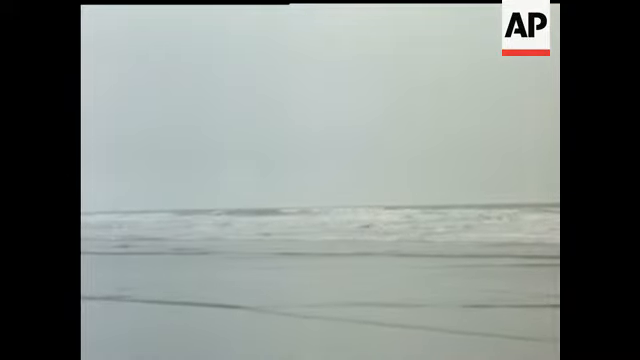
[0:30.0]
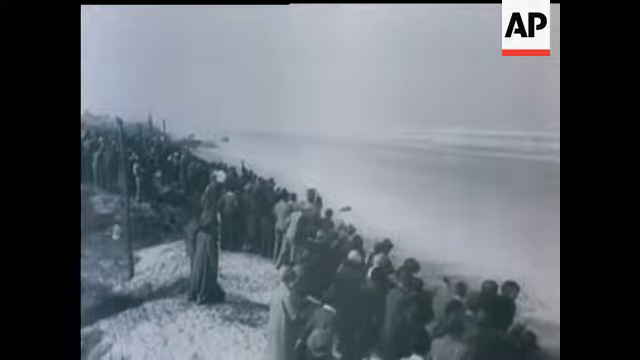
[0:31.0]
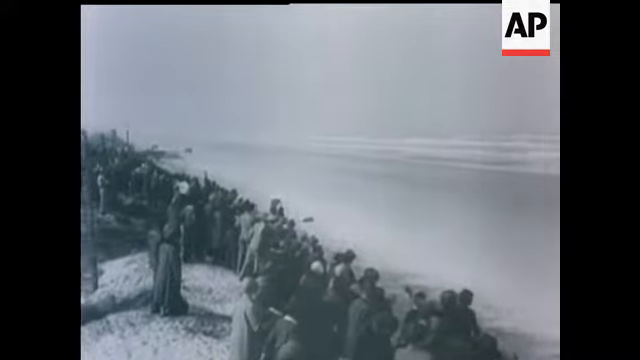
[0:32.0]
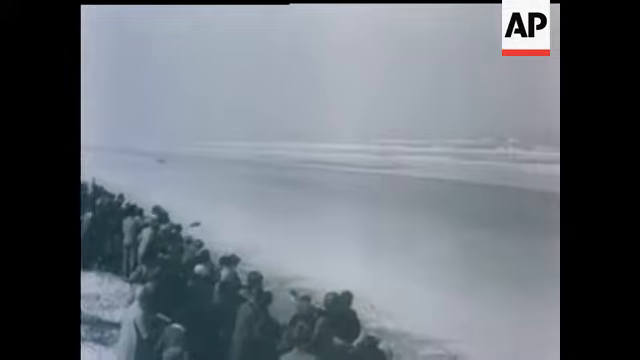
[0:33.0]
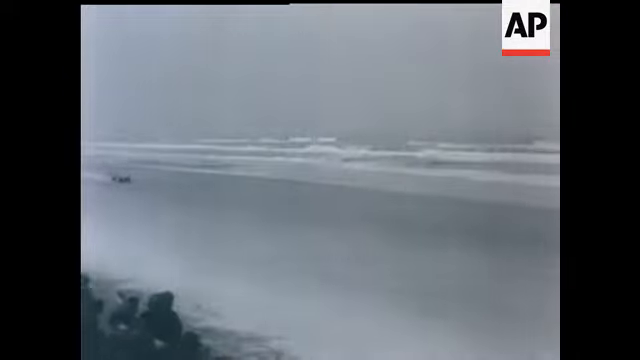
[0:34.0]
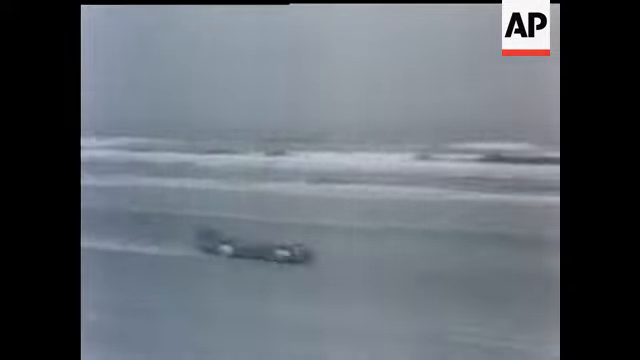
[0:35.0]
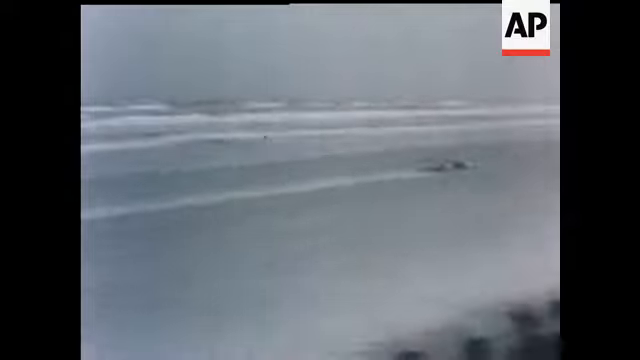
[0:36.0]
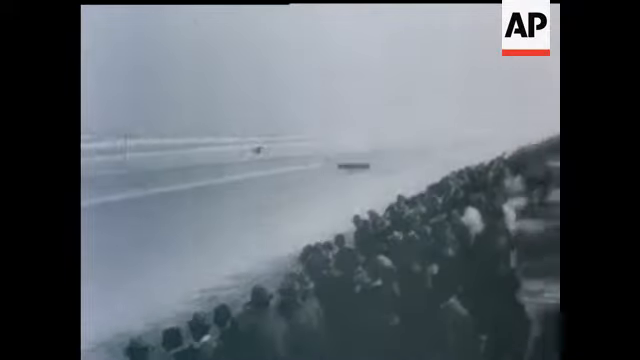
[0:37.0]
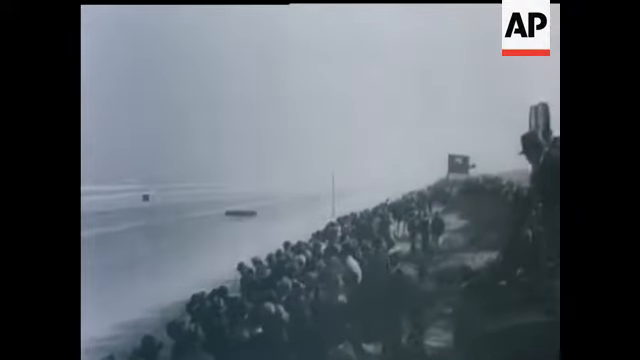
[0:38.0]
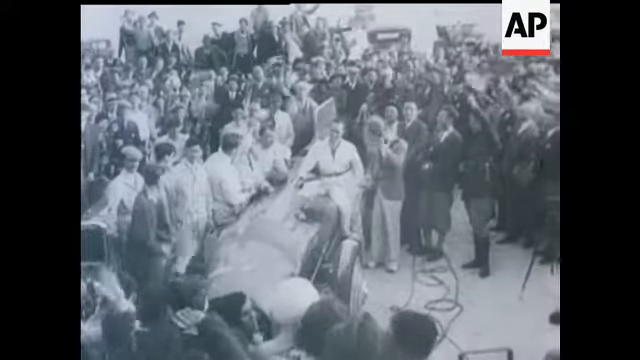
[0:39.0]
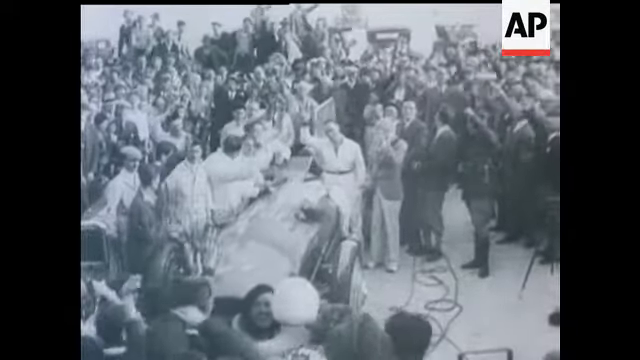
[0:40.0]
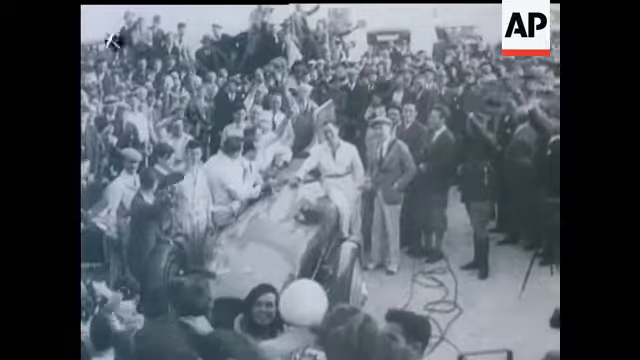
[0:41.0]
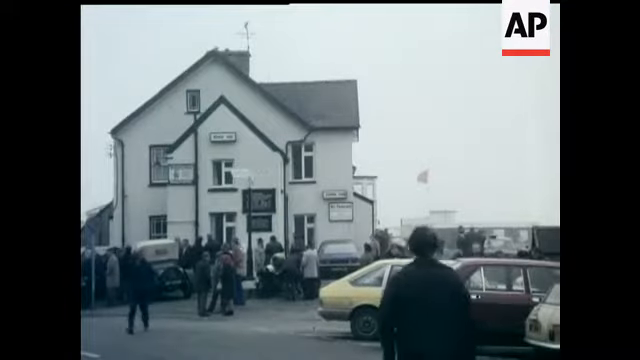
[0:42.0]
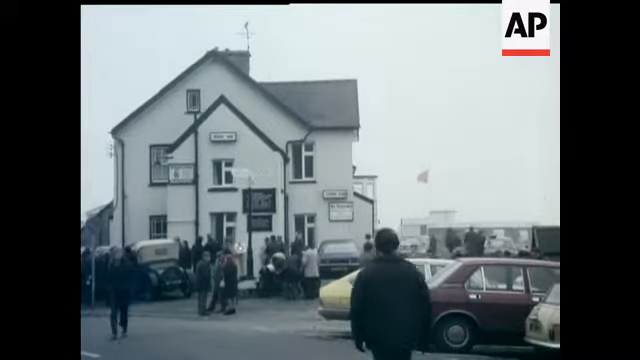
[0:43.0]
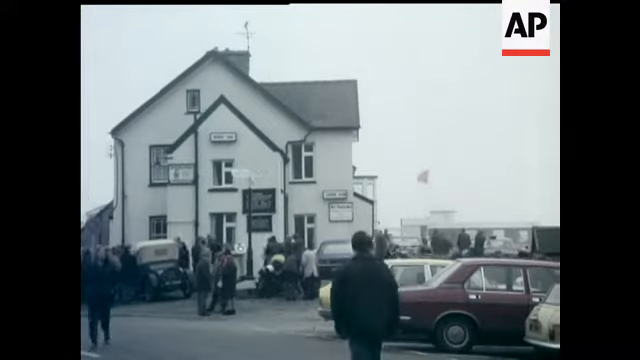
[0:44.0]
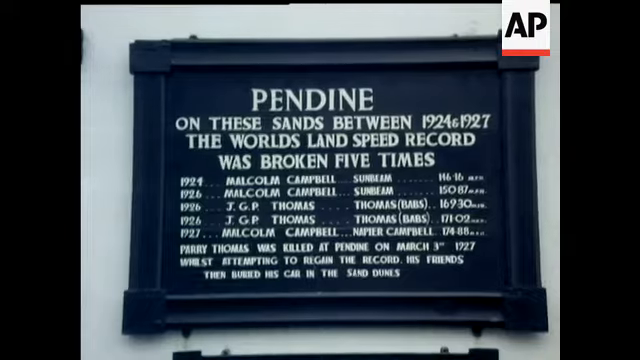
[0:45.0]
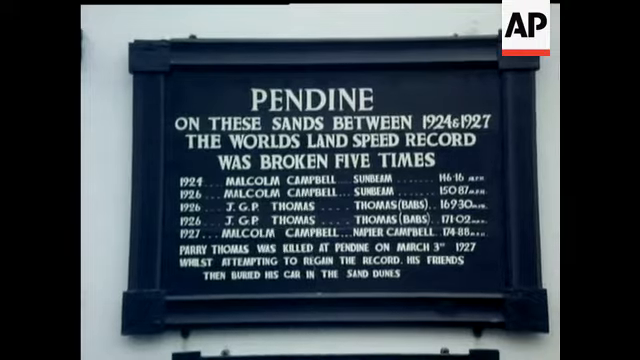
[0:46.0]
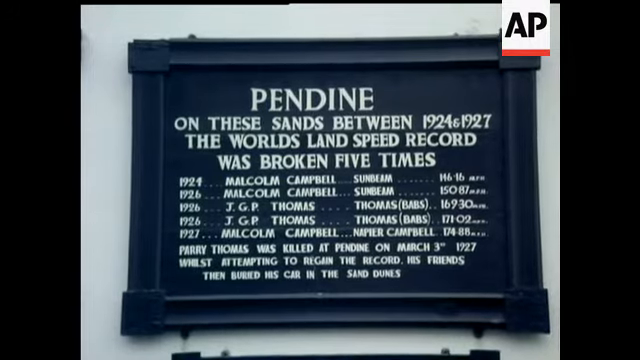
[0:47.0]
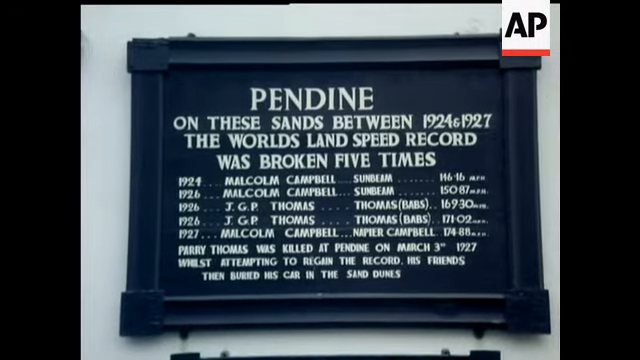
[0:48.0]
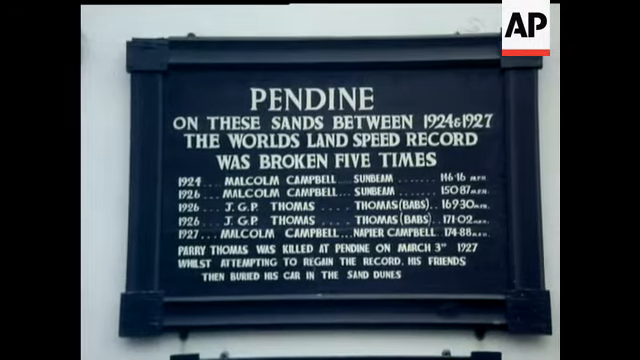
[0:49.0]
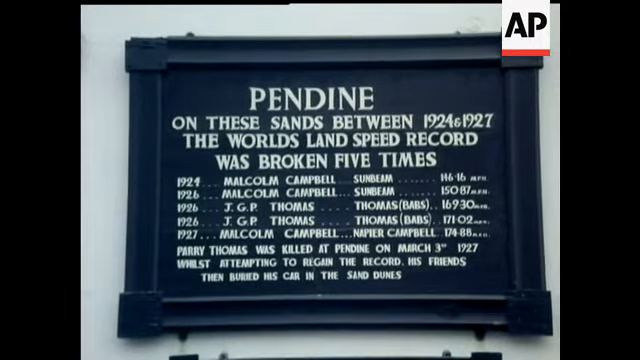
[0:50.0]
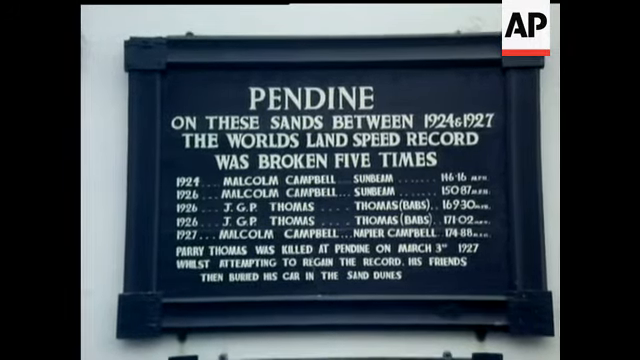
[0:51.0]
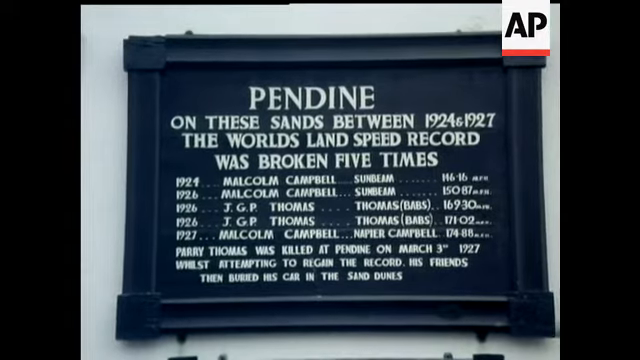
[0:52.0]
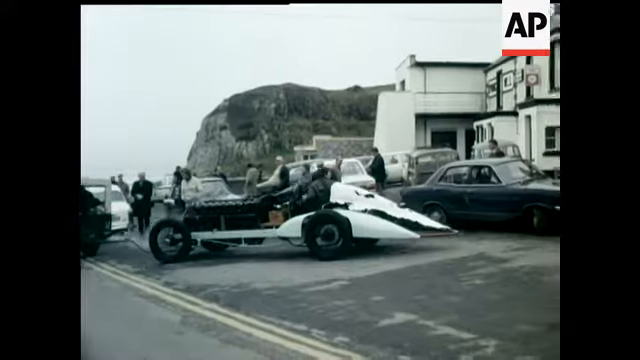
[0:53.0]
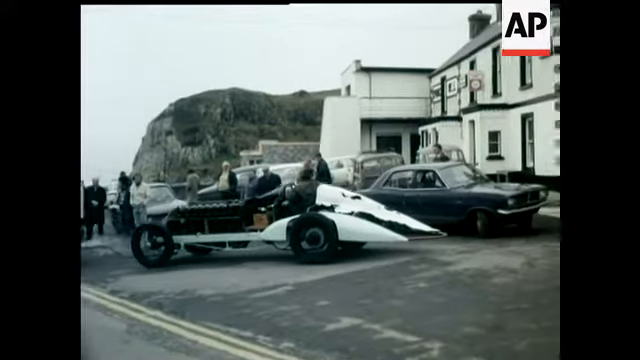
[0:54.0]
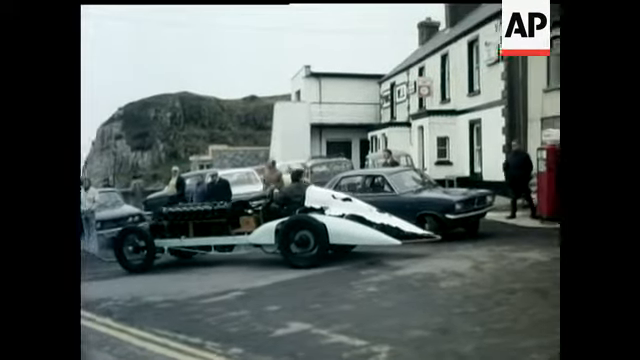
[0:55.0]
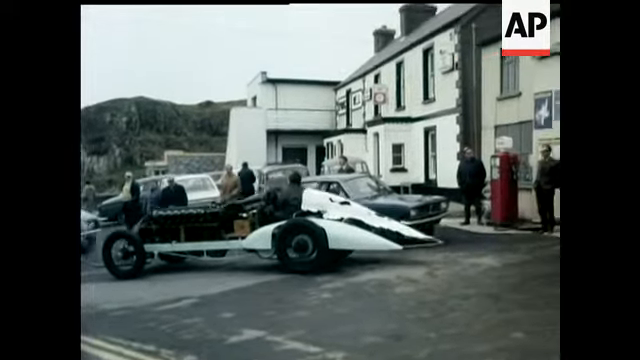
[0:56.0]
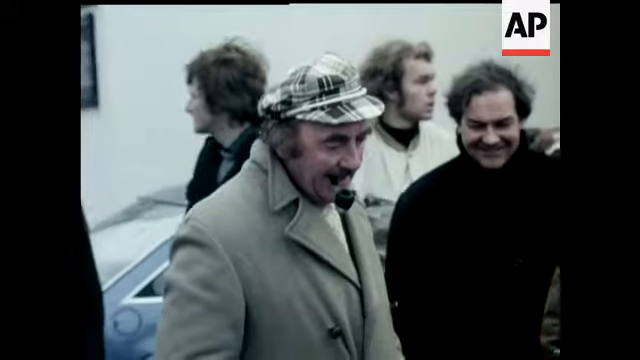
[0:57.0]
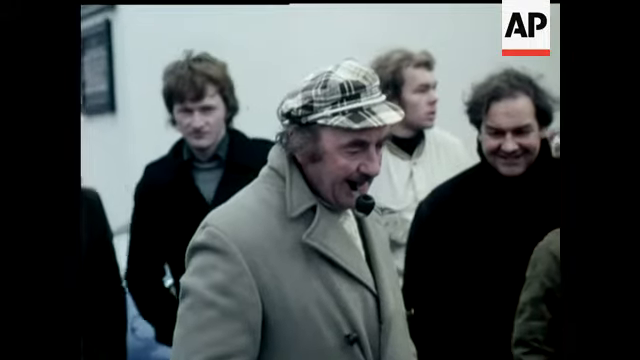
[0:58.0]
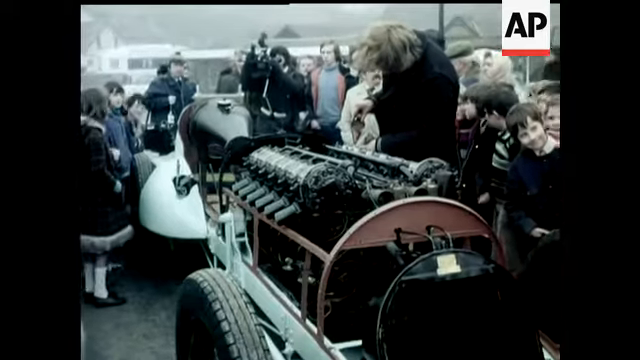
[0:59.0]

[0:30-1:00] Spectators stand on the left side of the beach, and off in the distance a race car shaped like a missile drives up the beach, parallel to where the people are spectating. The footage is in black and white. A crowd of people surrounds the vehicle, and someone sitting on top of it lifts his right hand and waves as the people cheer around him. A house that appears to be two stories is shown, with a lot of cars parked around it. A black, square-shaped sign with white text reads "Pendine On these sands between 1924 and 1927, the world's land speed record was broken five times," followed by a row of names, presumably the drivers who accomplished this. One of these drag racing cars is then shown, with an end that is sharp like a knife and an engine that is kind of exposed. A lone driver appears to be backing it up, so the sharp part is actually at the back.